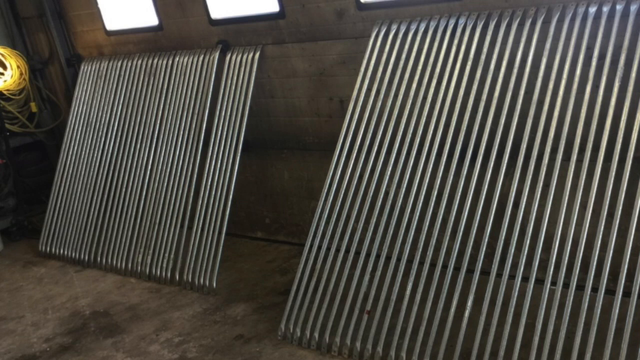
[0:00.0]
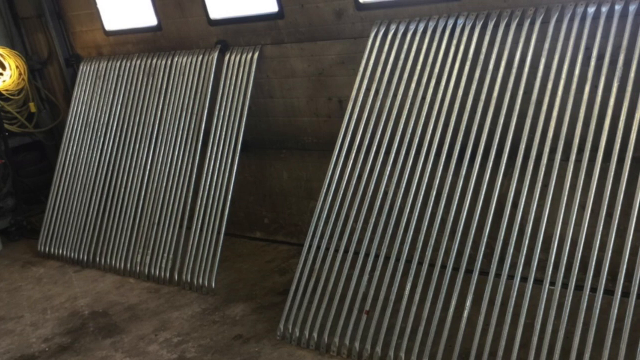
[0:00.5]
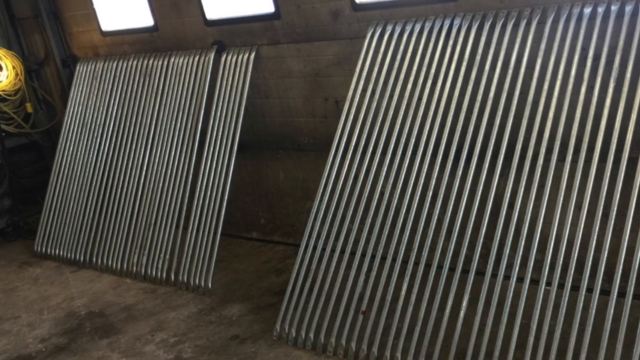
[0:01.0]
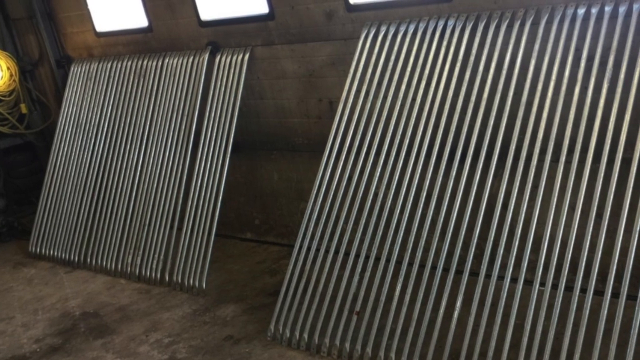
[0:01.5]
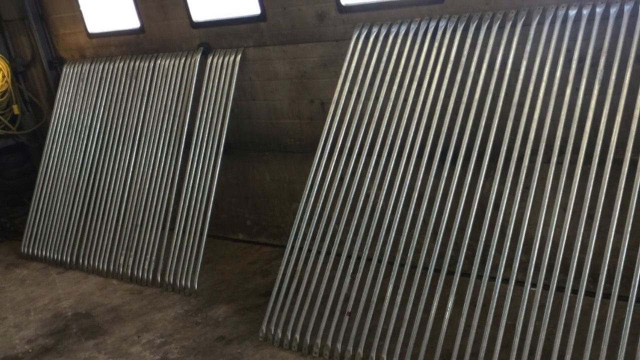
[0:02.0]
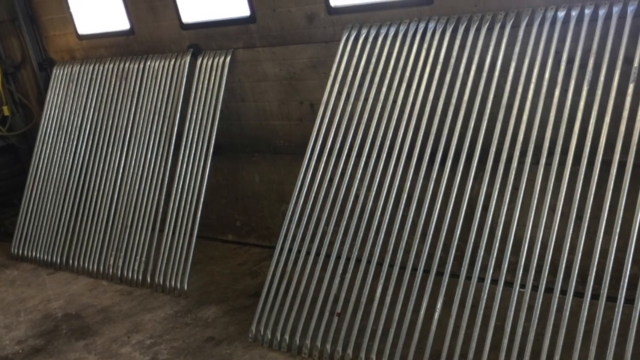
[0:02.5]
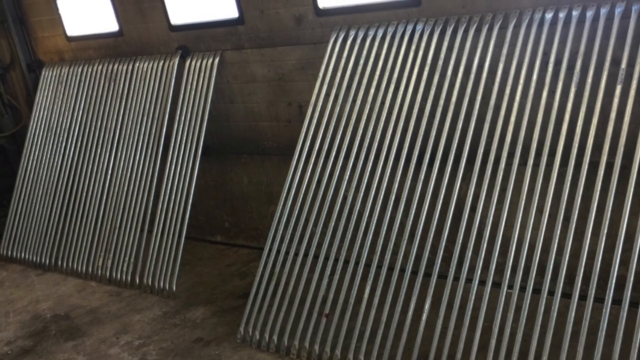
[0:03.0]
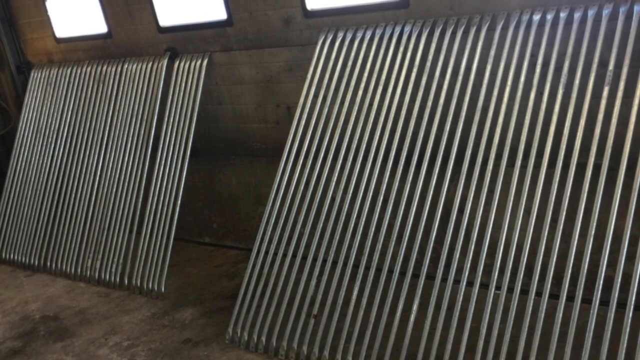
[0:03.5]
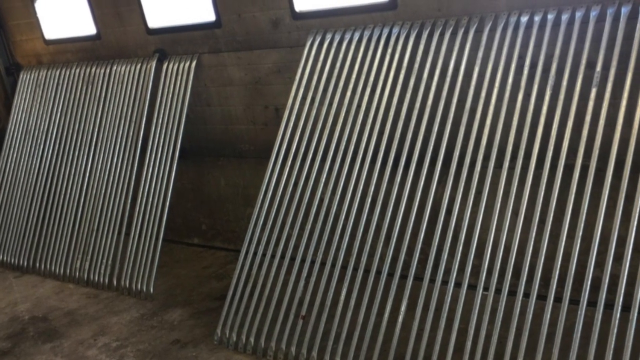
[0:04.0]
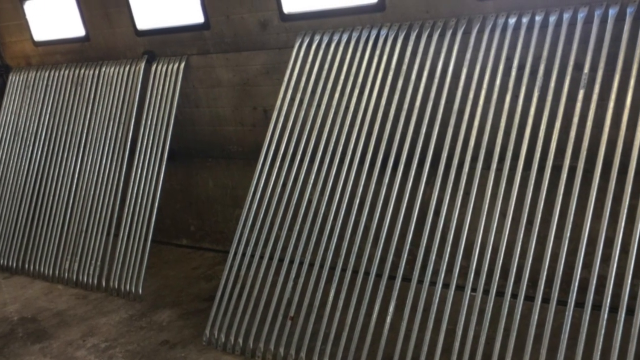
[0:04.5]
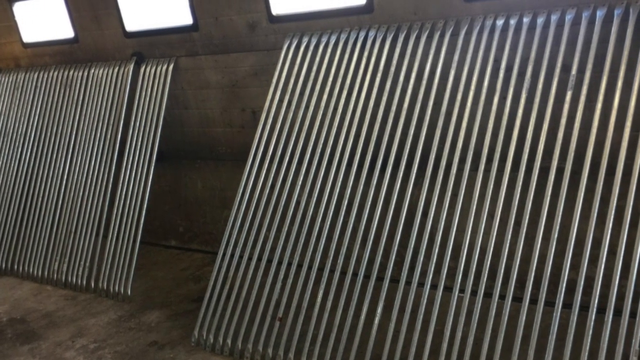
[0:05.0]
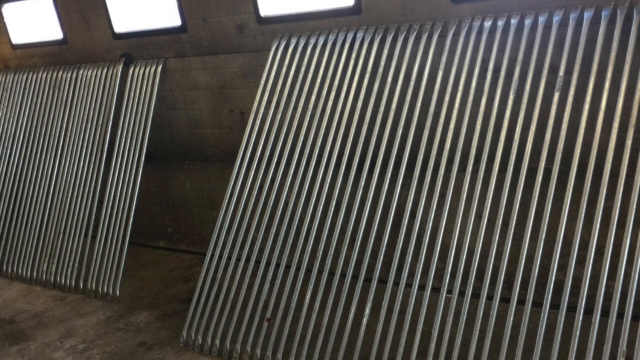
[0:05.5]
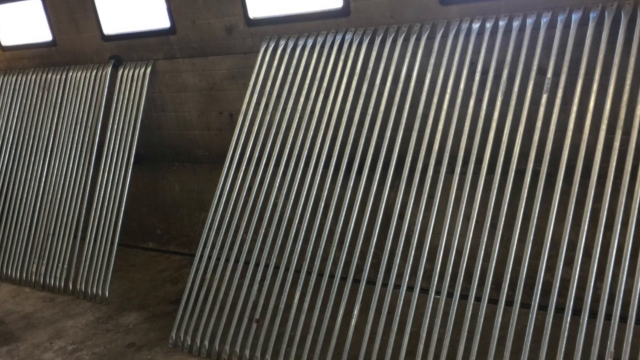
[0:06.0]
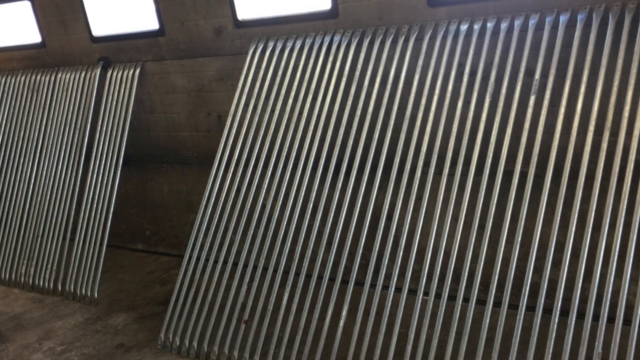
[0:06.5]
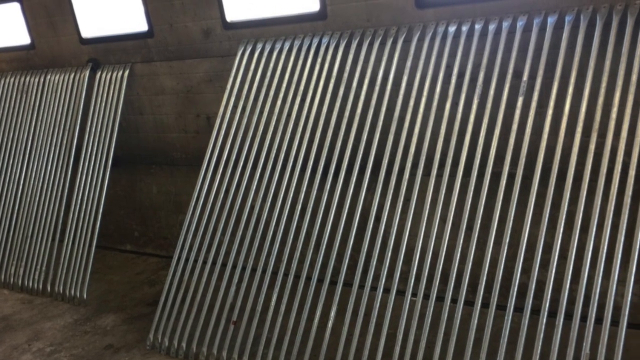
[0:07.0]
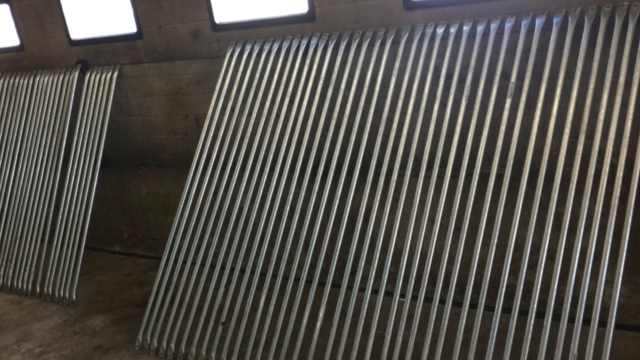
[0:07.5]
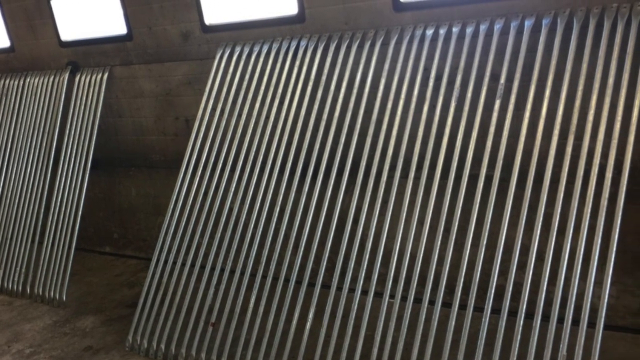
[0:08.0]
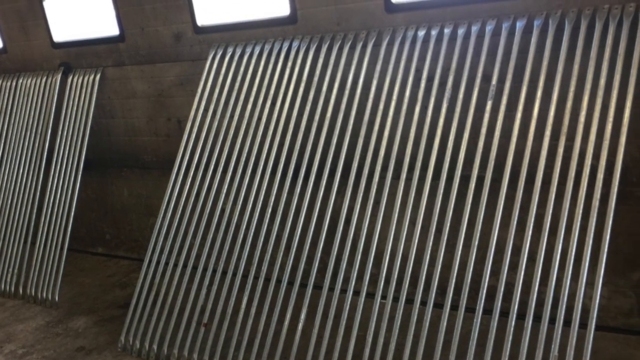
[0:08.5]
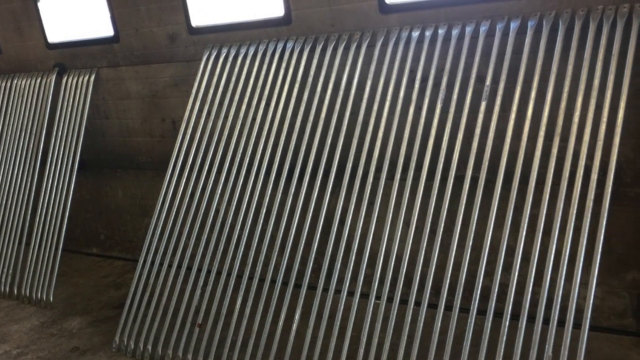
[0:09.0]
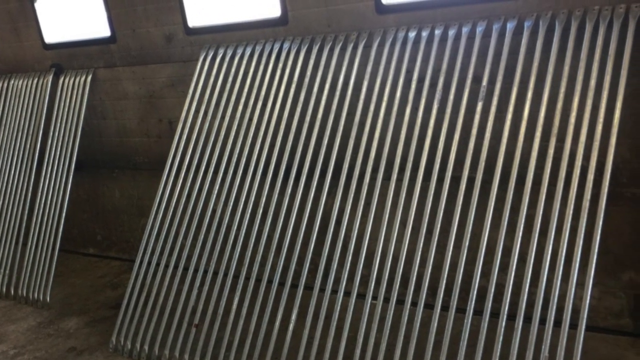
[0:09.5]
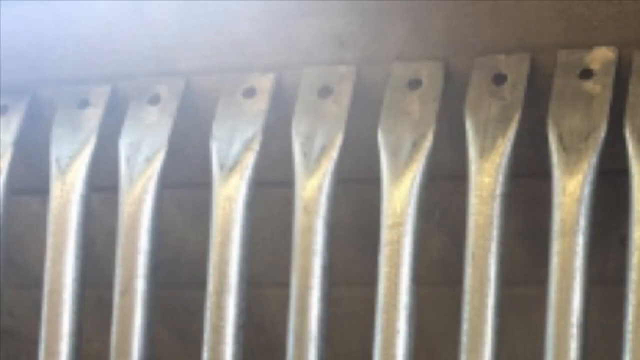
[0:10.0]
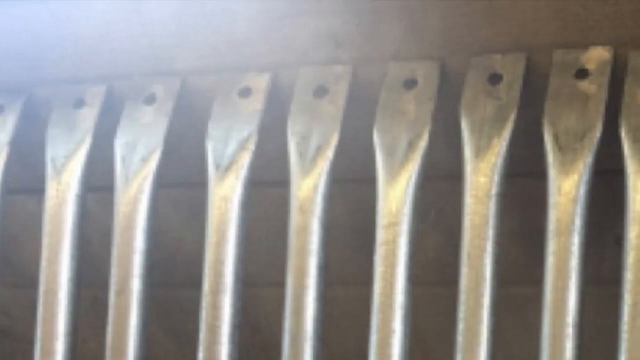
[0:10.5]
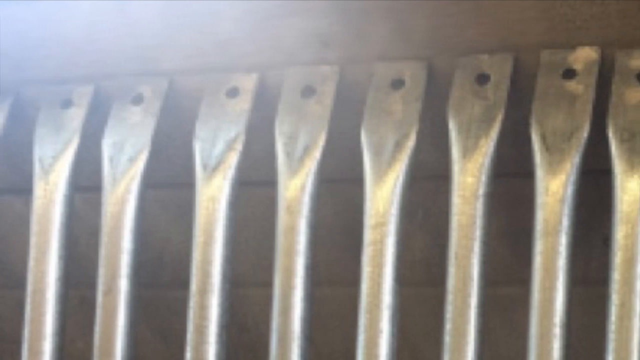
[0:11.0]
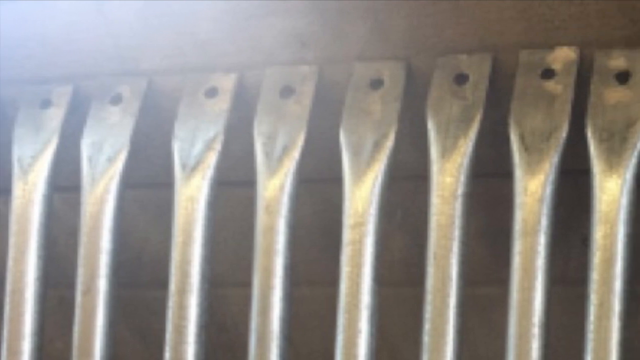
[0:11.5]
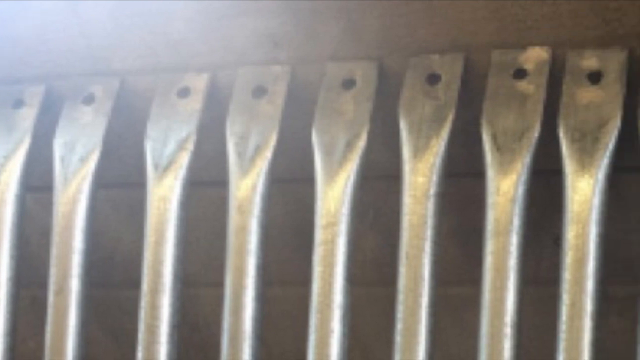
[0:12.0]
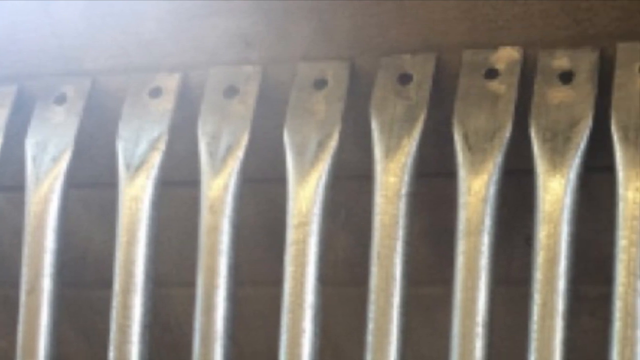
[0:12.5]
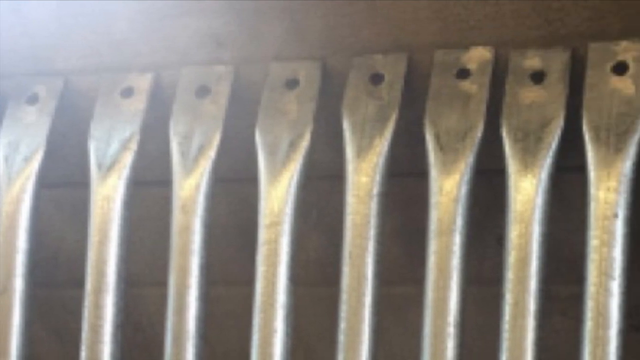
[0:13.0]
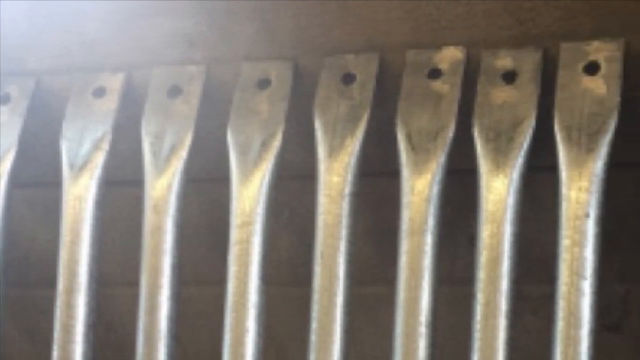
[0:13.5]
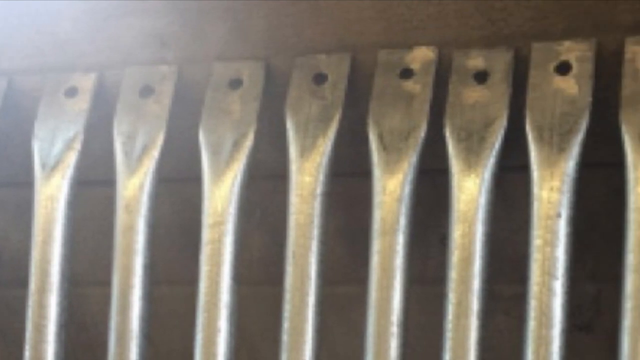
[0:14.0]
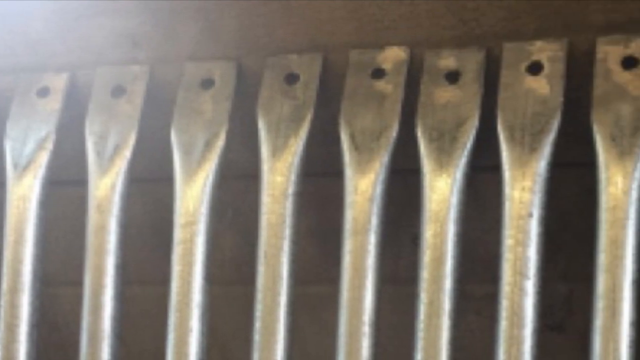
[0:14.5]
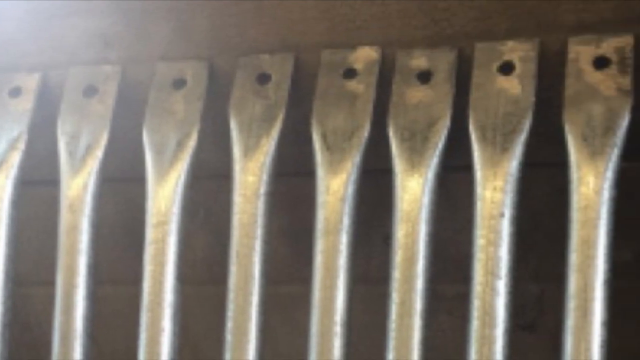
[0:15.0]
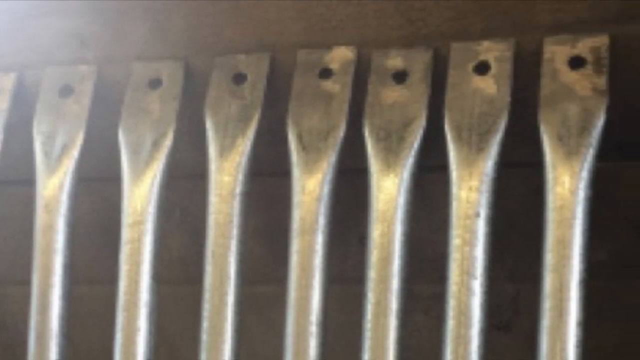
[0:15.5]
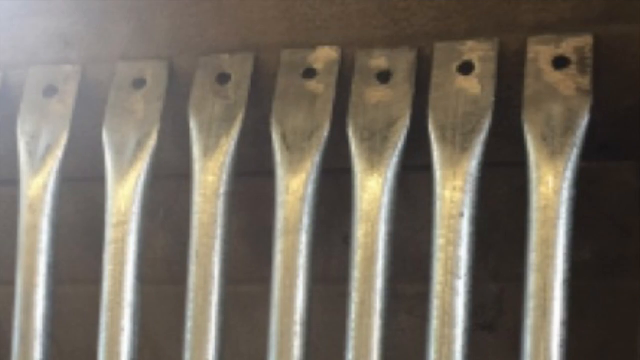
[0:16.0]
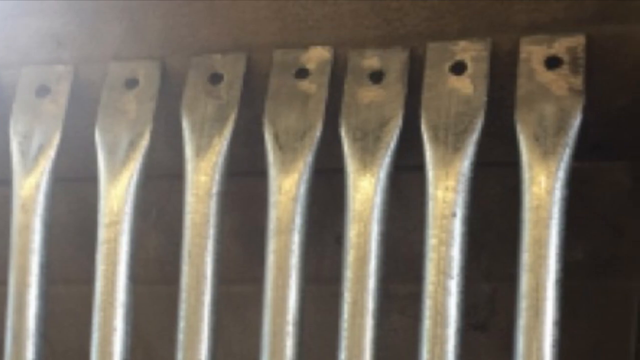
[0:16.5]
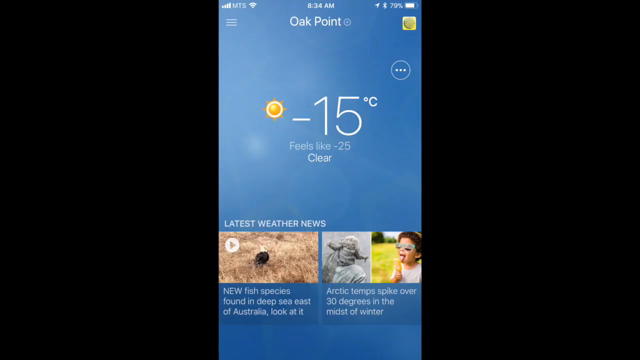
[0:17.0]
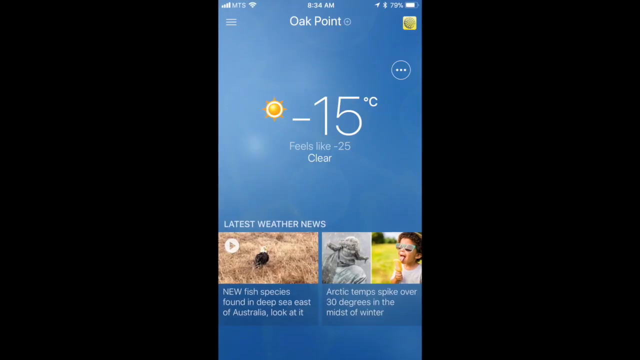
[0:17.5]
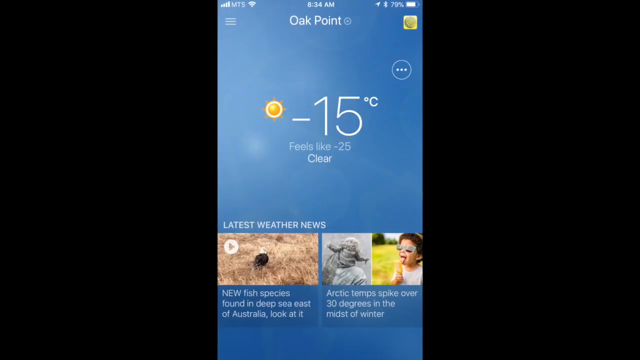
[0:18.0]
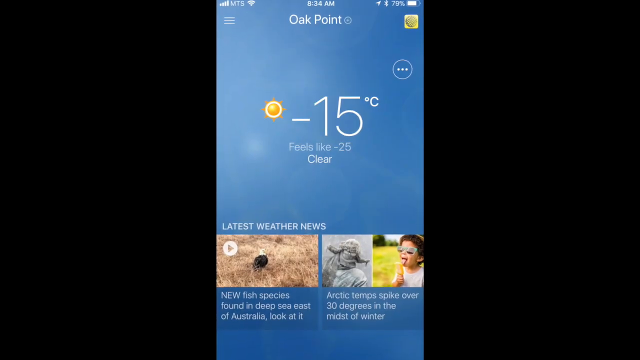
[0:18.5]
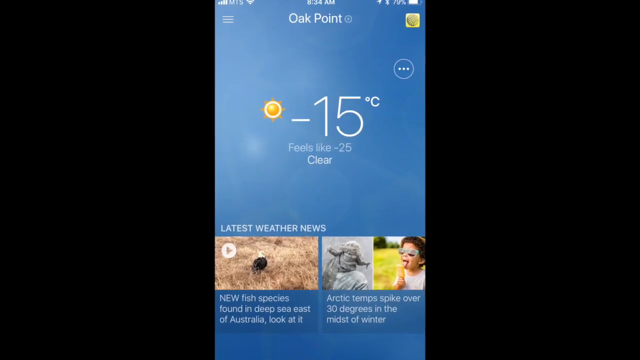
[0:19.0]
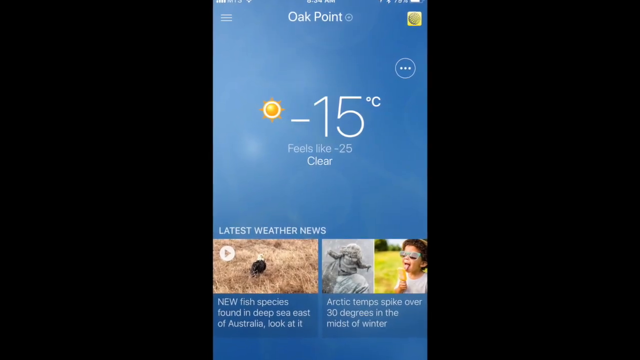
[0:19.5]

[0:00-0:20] Some metal rods or poles are shown, with holes at their ends. The setting looks like the inside of some kind of workshop or warehouse. The video alternates between this scene of long metal pieces and a display of the weather and temperature in Oak Point, appearing to show the same things repeatedly. No main subjects are visible.